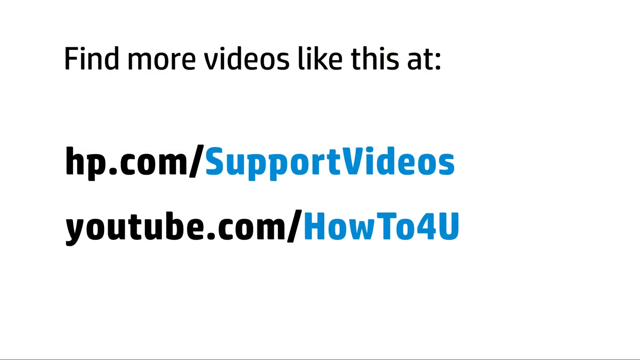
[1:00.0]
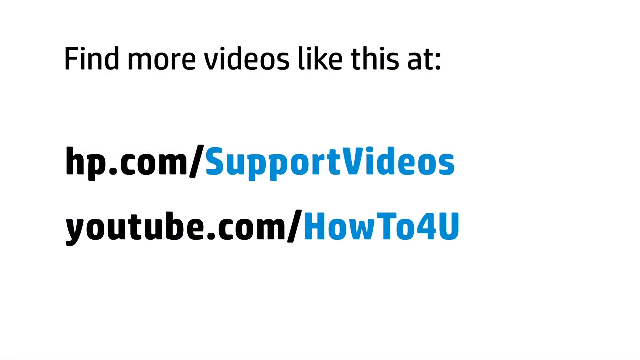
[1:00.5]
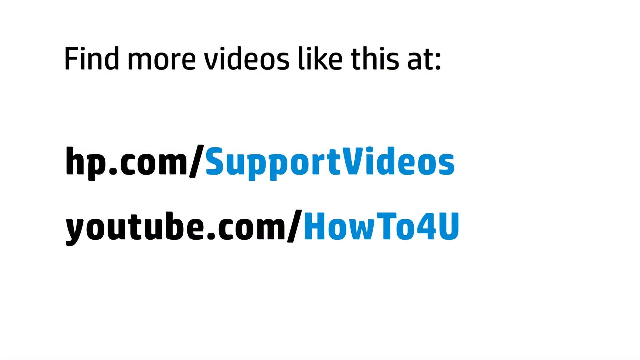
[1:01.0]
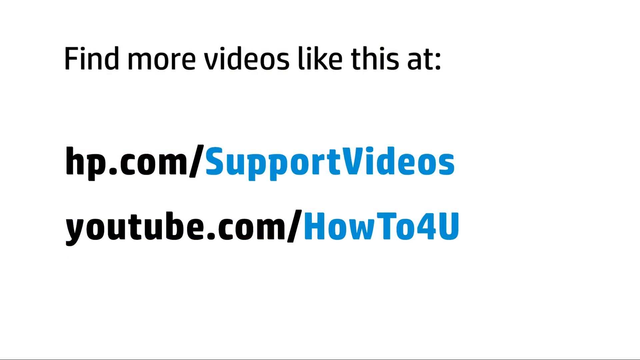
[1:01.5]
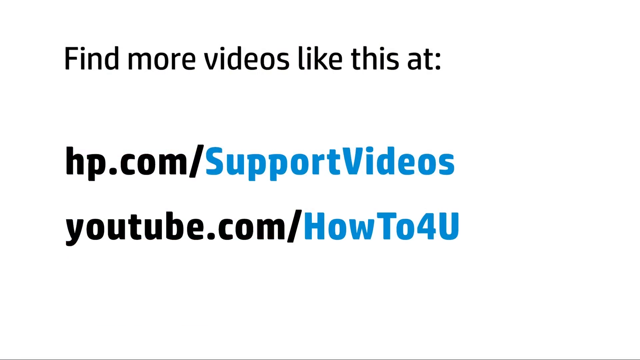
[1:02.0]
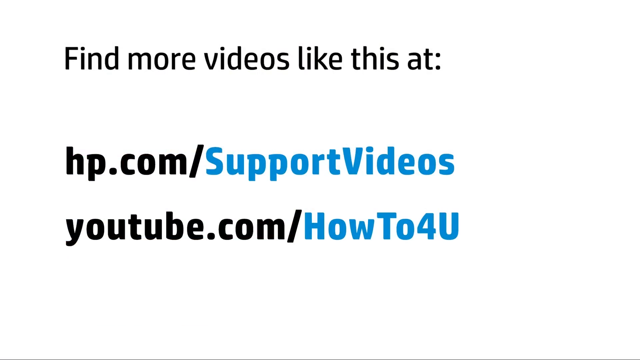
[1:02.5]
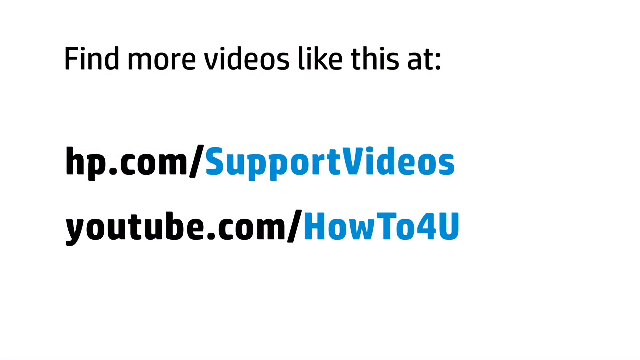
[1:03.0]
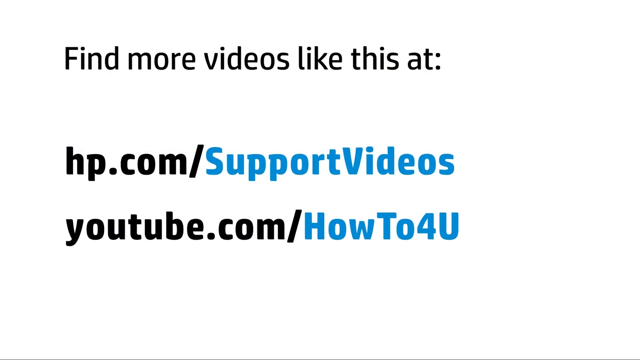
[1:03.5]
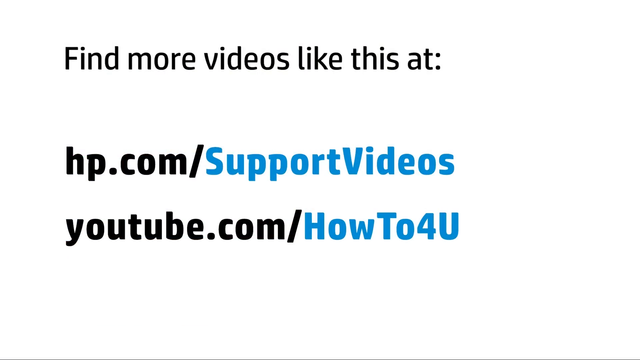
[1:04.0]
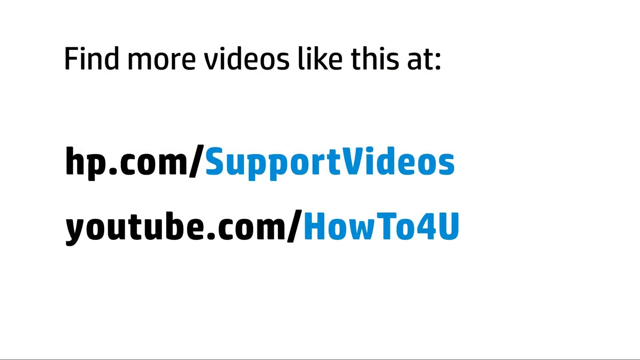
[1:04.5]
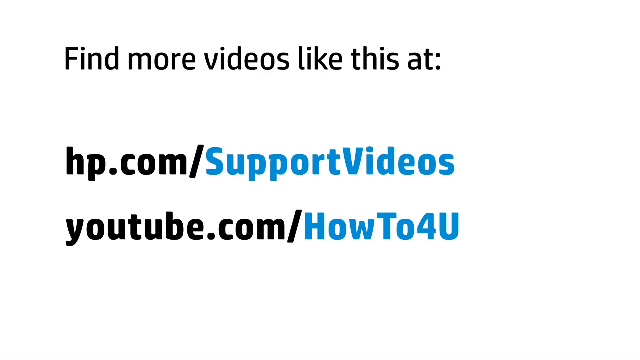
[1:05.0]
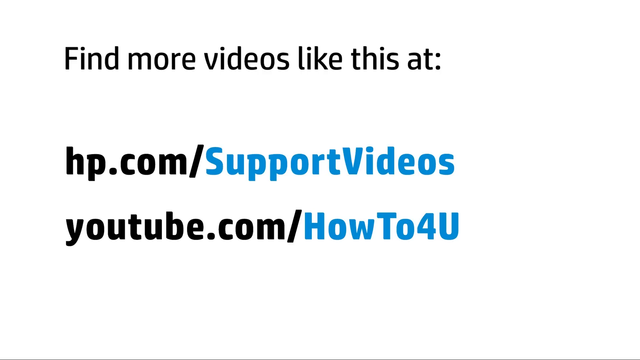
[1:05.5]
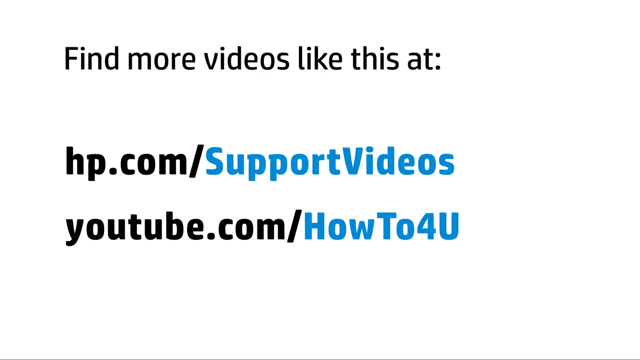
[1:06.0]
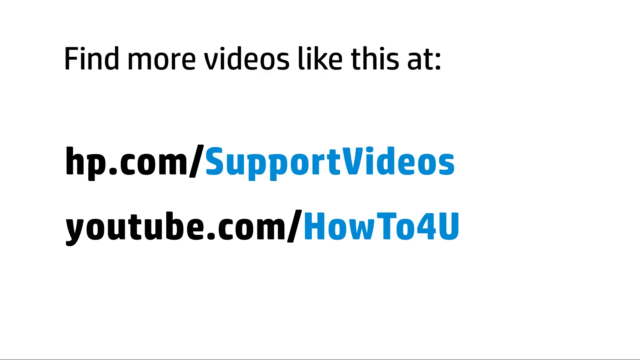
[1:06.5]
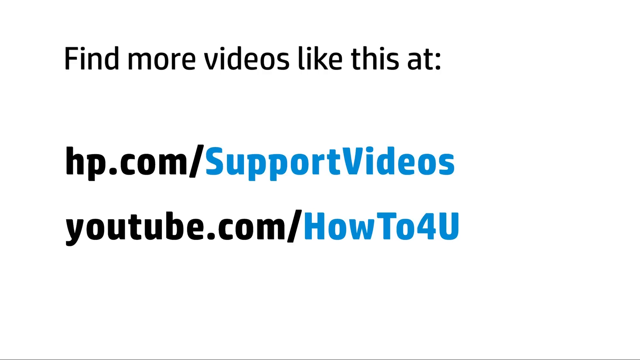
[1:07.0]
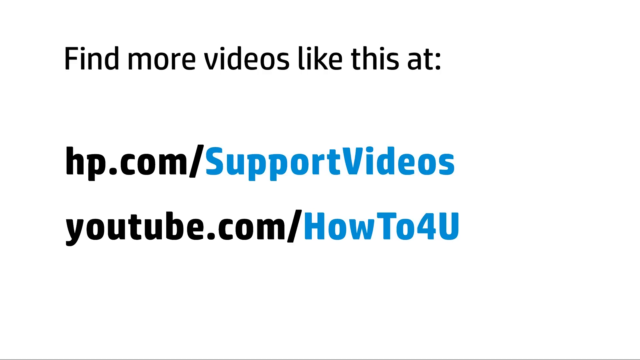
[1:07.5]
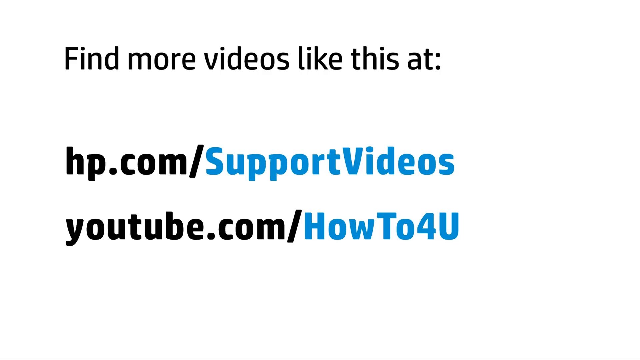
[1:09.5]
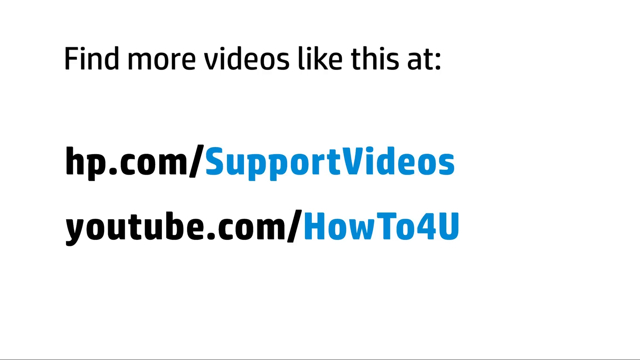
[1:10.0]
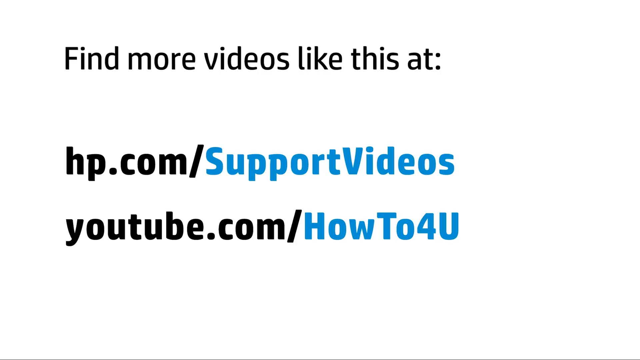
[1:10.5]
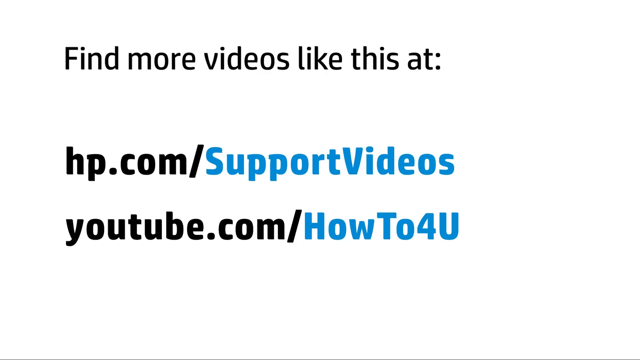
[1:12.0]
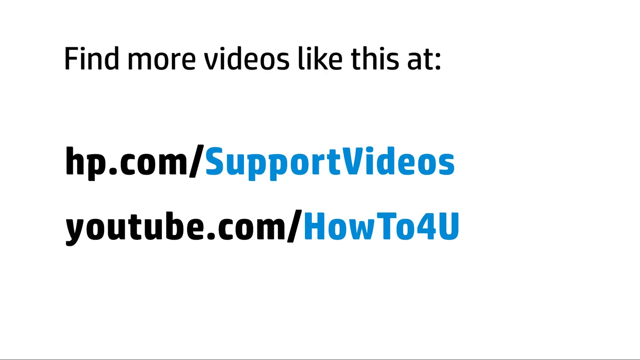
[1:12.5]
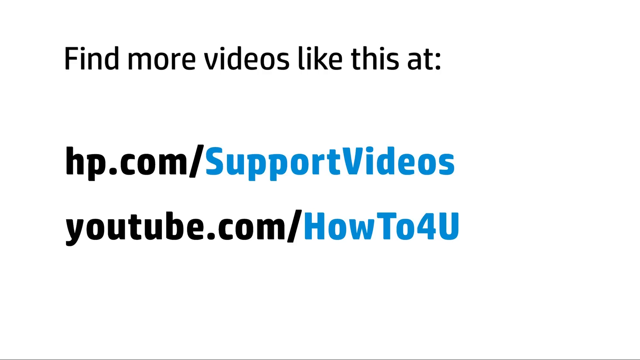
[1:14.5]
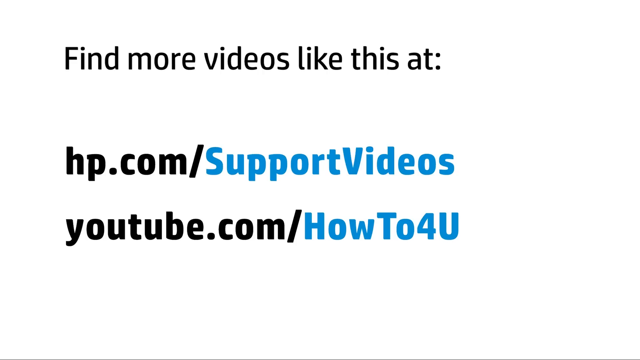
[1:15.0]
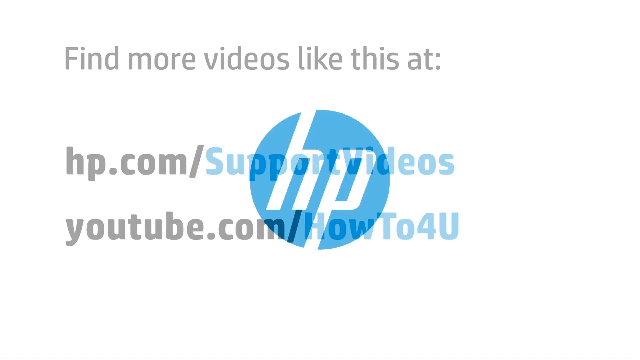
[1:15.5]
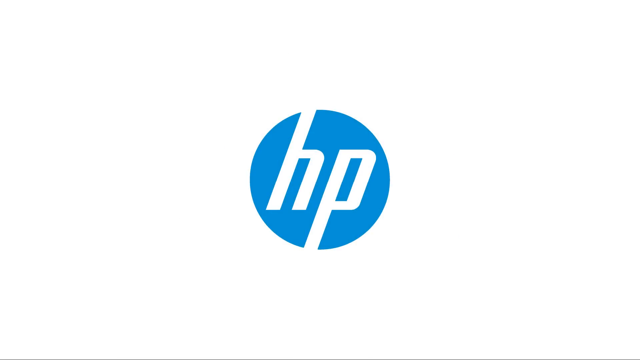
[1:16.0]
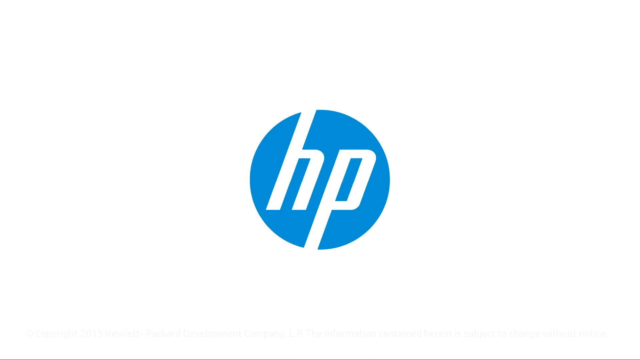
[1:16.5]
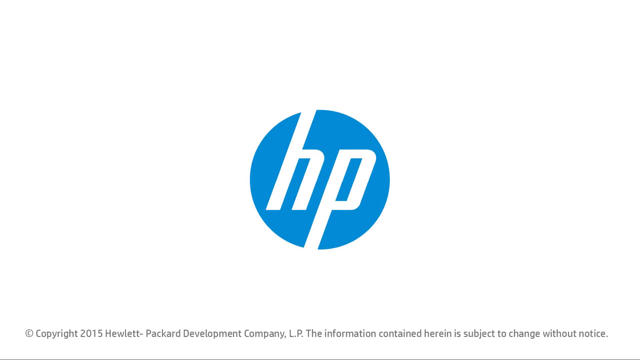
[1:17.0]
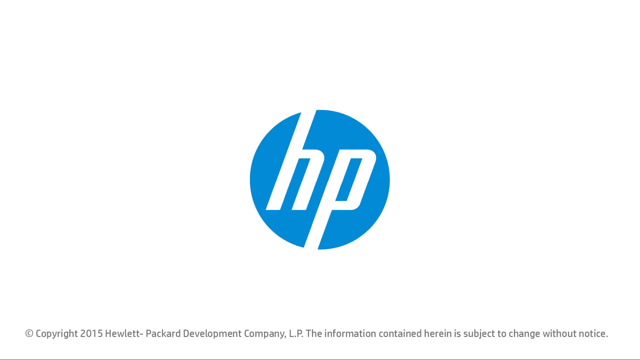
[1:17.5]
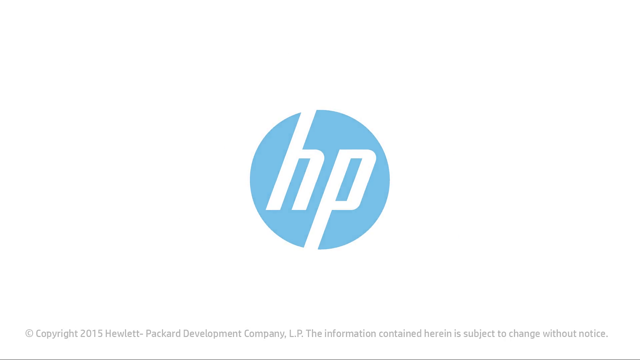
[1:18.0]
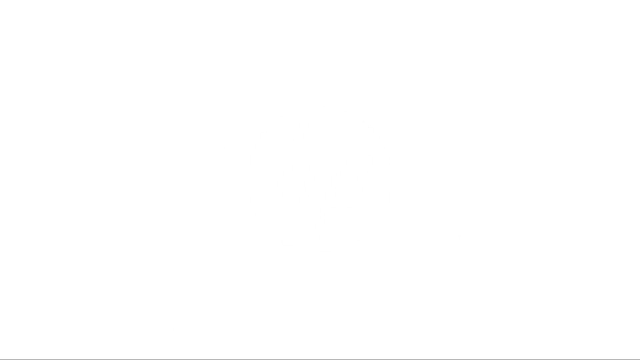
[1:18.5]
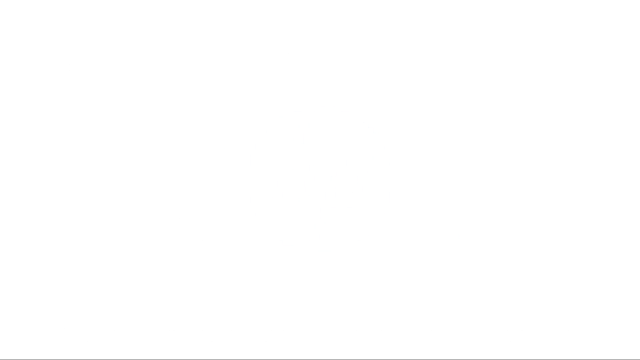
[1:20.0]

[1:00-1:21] The screen shows three lines: the first says "find more videos like this at", the second is the HP website URL "hp.com/support videos", and the third is a link to the YouTube channel, "youtube.com/howto4u". Nothing happens for about 10 to 15 seconds; then all the text disappears and a white and blue HP logo appears in the center of a completely white background. After a few seconds the logo fades away, leaving the screen completely white.